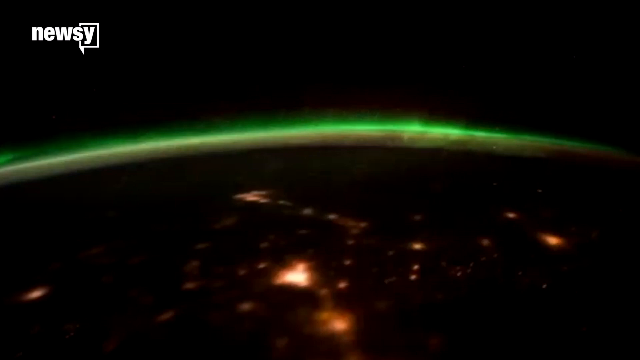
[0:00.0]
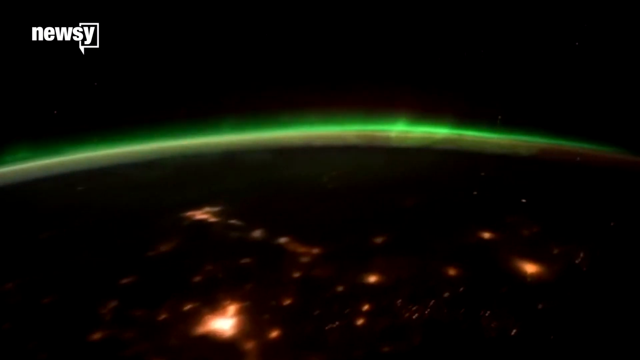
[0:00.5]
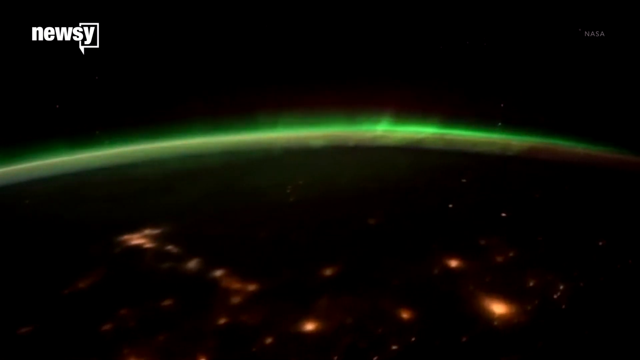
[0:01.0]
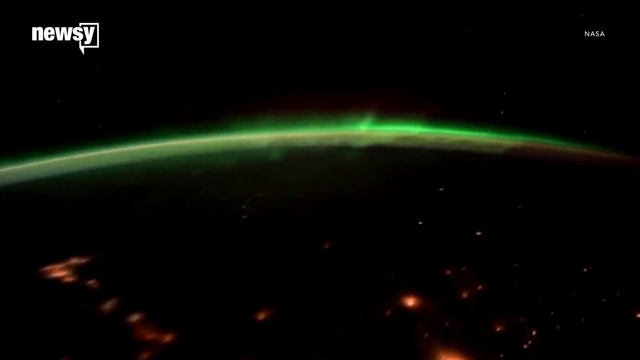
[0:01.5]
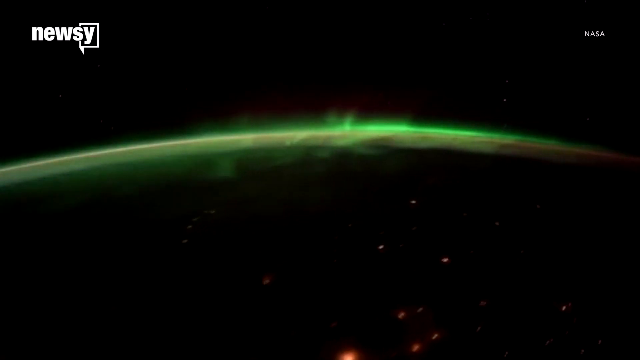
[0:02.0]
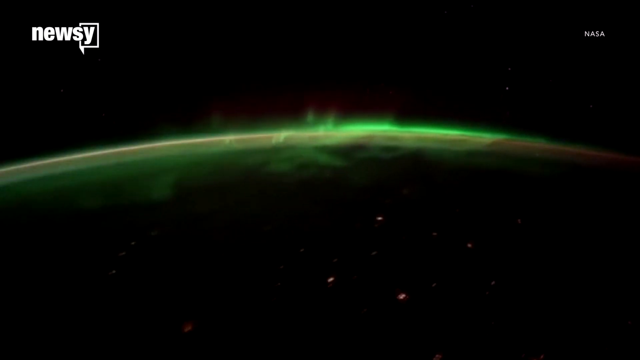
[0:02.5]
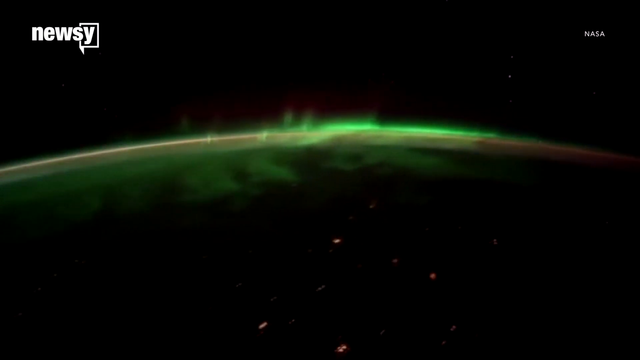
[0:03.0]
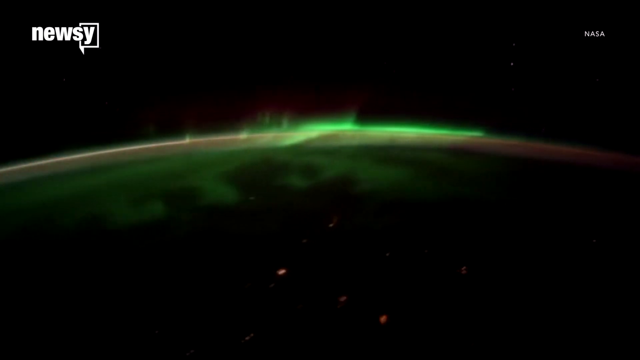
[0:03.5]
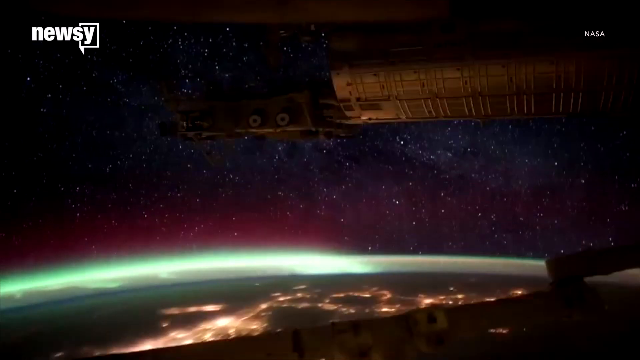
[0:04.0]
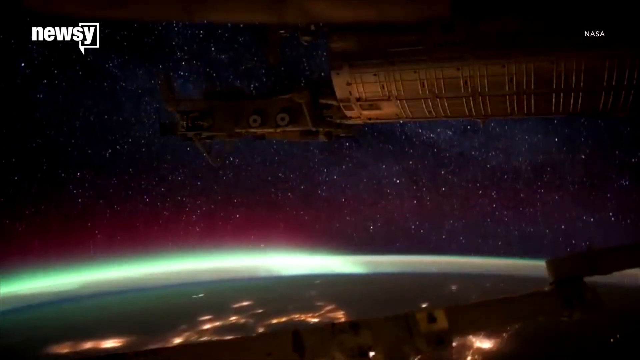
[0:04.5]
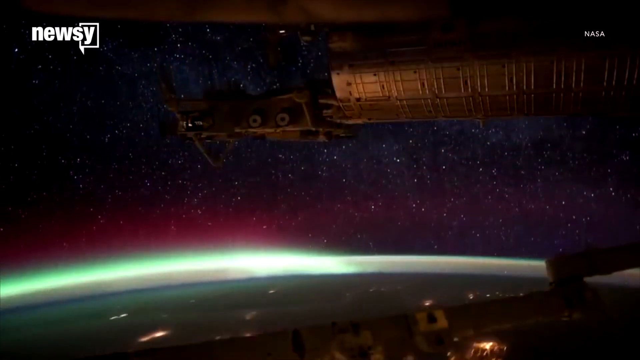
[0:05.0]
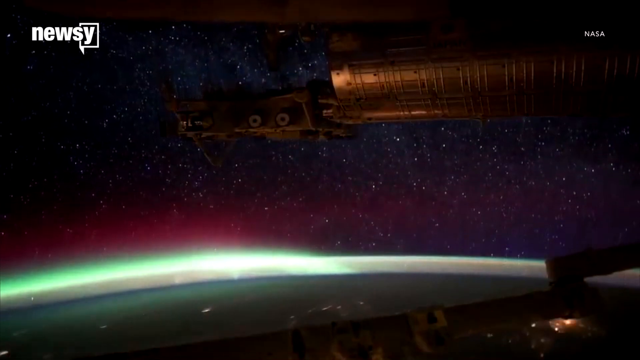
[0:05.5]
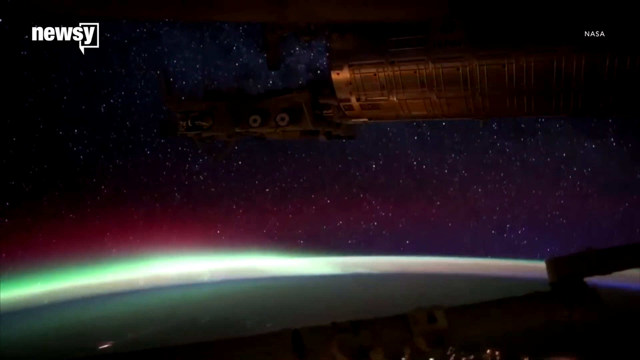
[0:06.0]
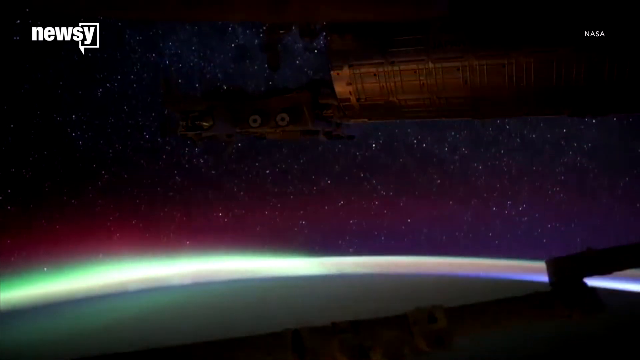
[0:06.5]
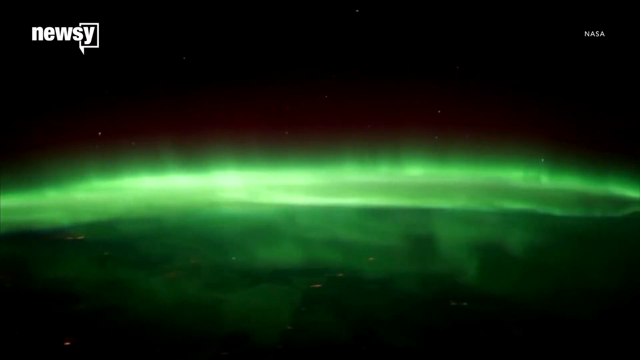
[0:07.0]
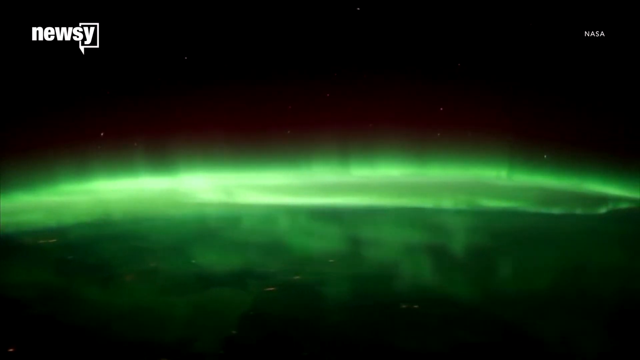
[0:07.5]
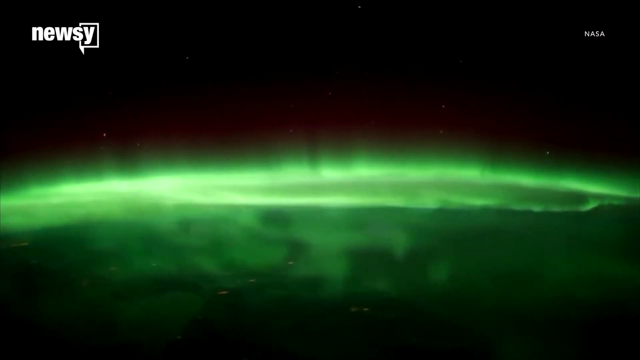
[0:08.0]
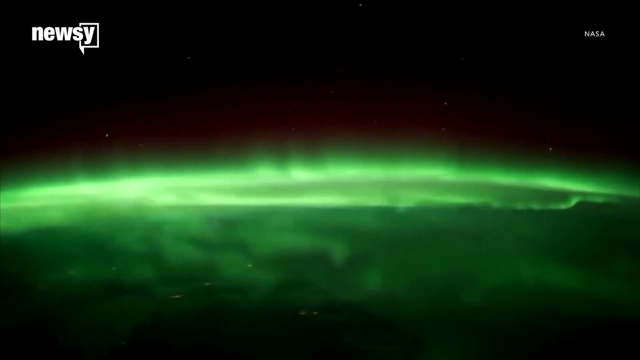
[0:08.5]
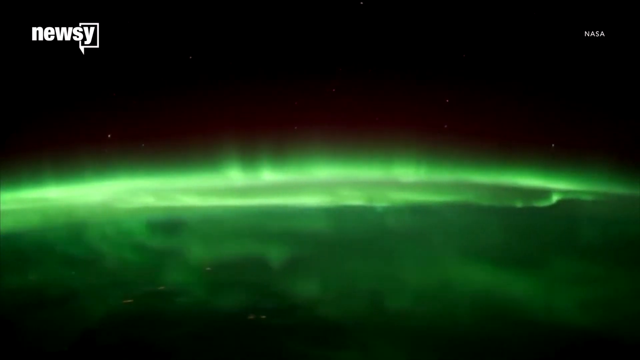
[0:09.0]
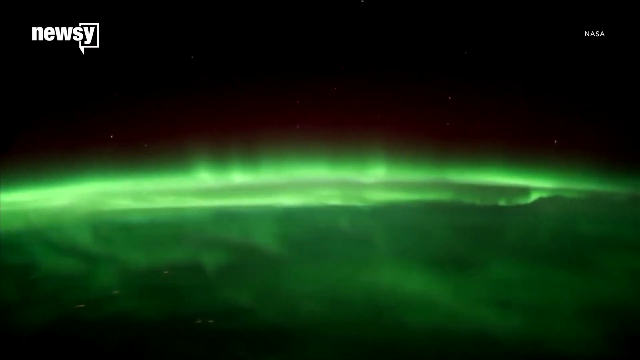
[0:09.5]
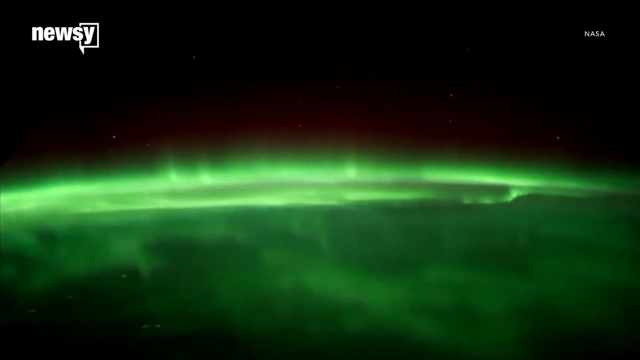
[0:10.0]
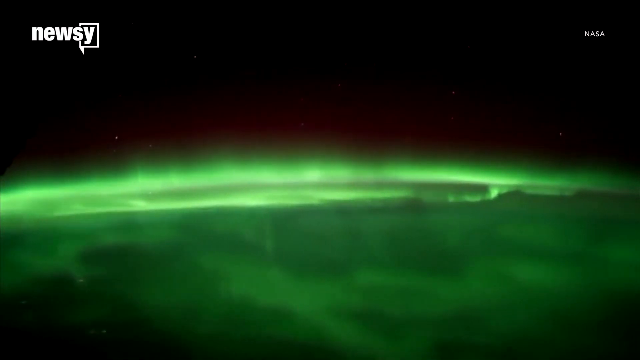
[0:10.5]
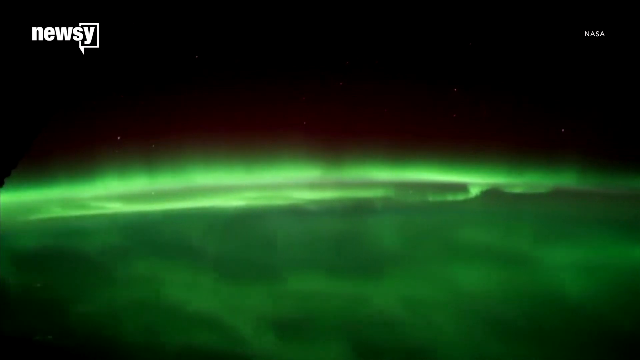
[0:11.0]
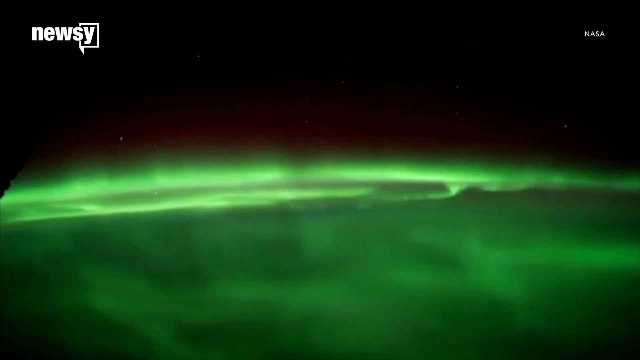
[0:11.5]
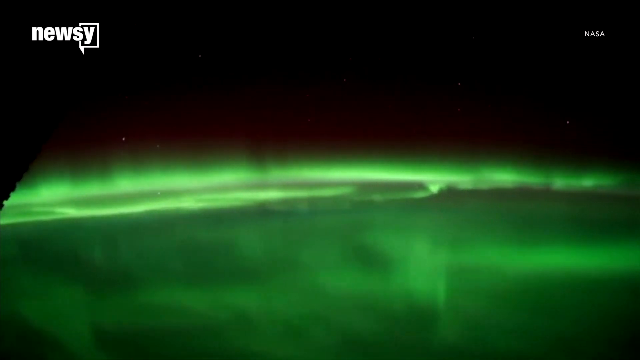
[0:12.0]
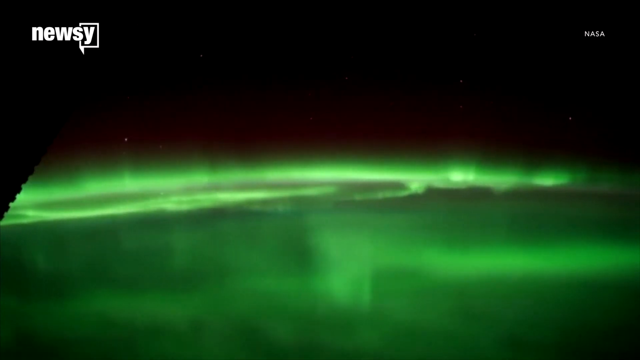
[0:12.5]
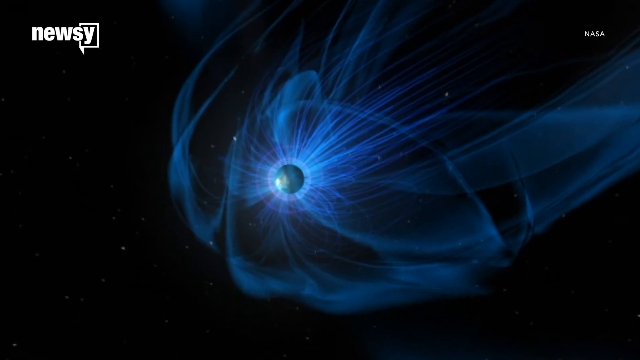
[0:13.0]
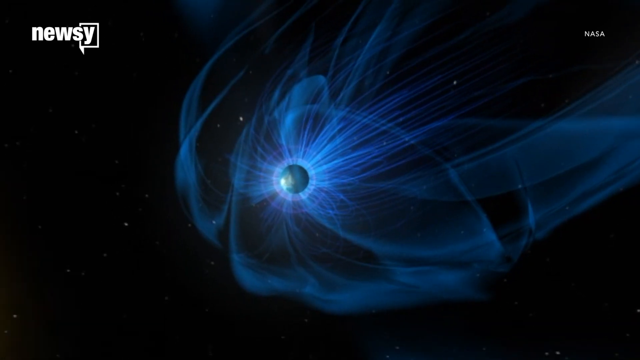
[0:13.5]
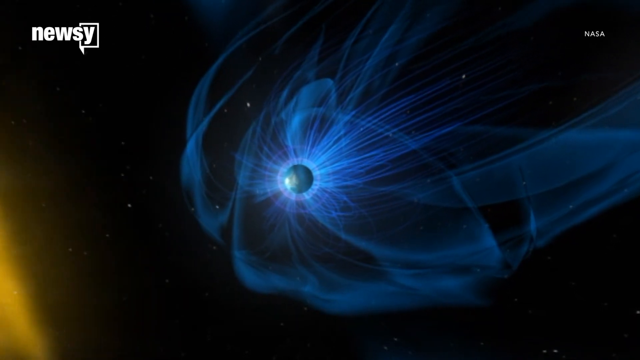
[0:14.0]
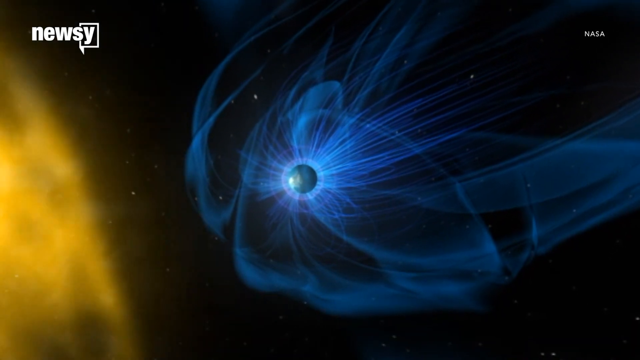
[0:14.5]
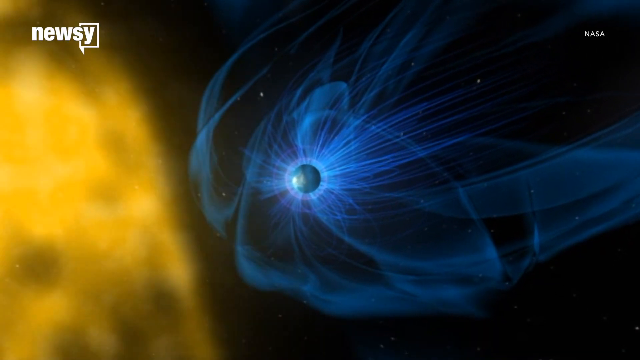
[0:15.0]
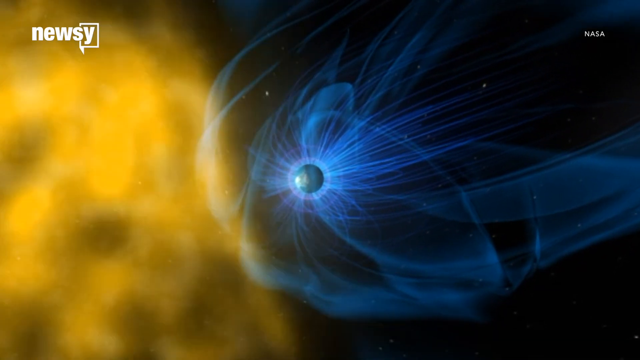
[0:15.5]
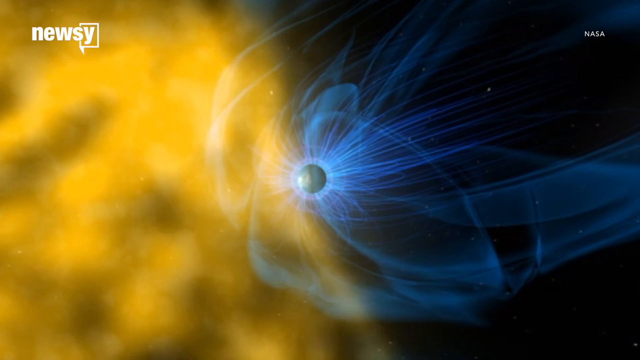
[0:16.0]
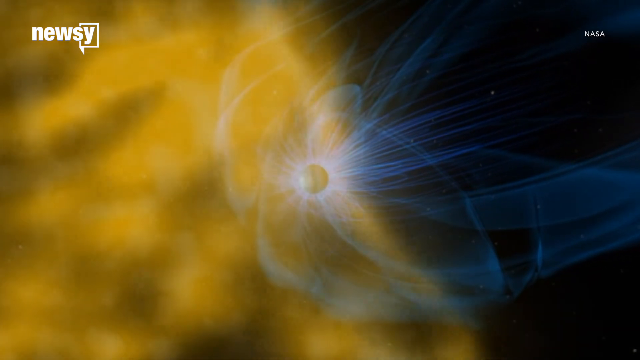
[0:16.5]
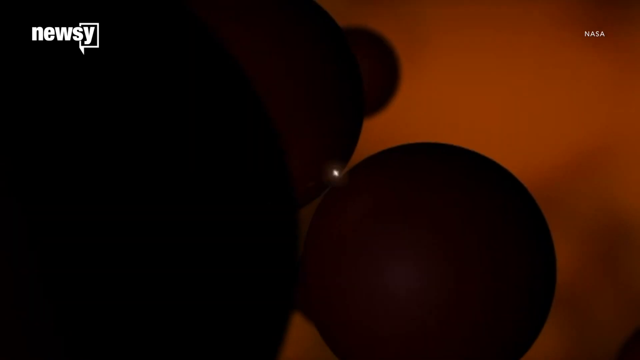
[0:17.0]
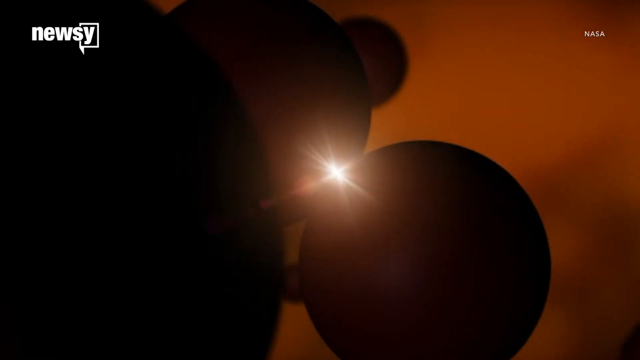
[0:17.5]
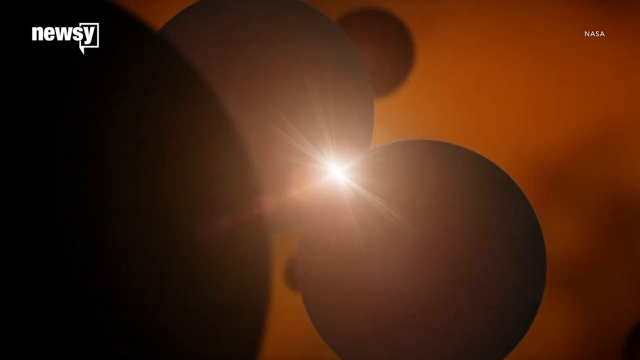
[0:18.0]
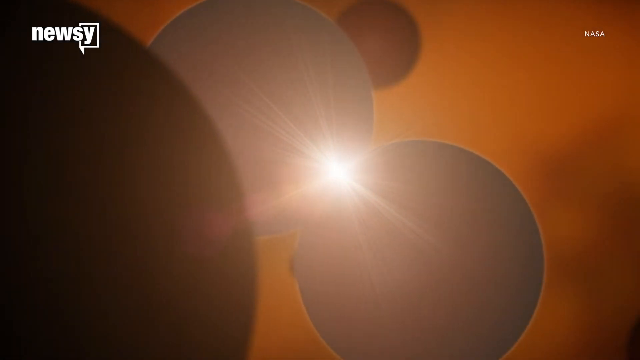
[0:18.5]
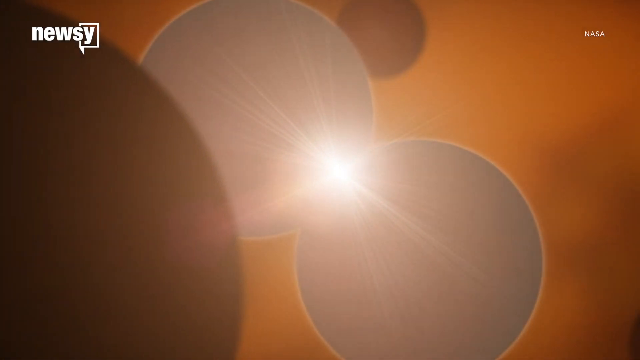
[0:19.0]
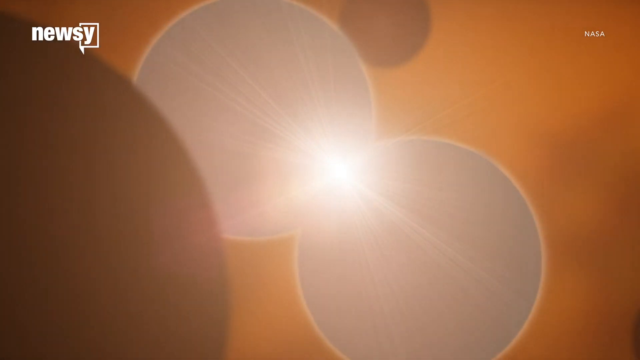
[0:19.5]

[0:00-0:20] The view is of outer space, outside the planet, and seems to be taken from the International Space Station or some similar aerospace vehicle. A planet is visible, looking very colorful and shiny. Its upper portion seems to be green and its lower part seems to be a deep dark color. There are some lights on it that seem to be fire or something similar, though this is uncertain.